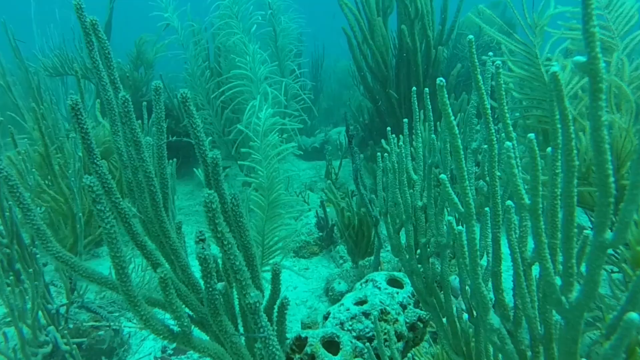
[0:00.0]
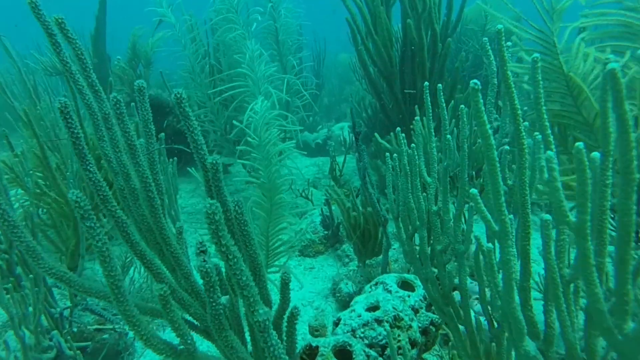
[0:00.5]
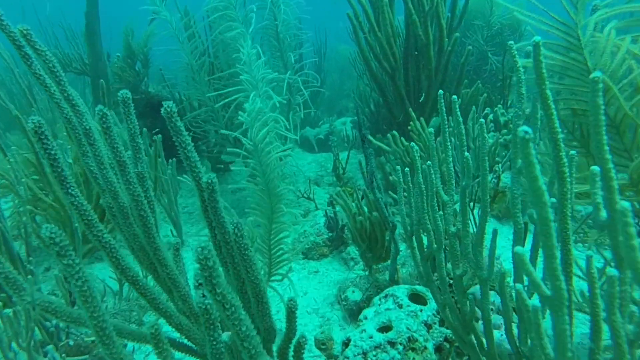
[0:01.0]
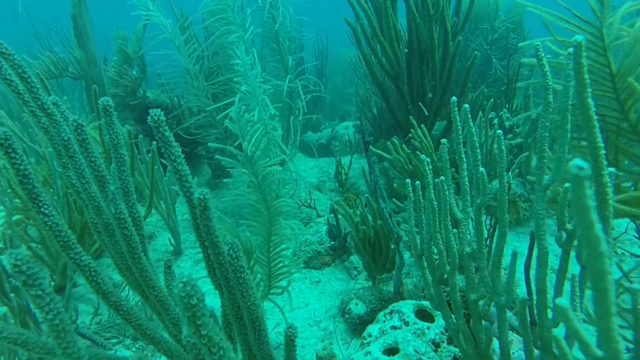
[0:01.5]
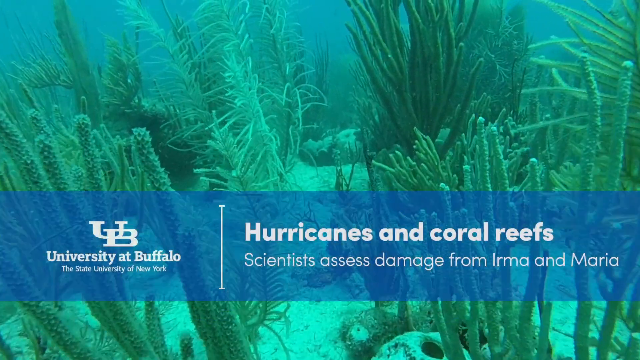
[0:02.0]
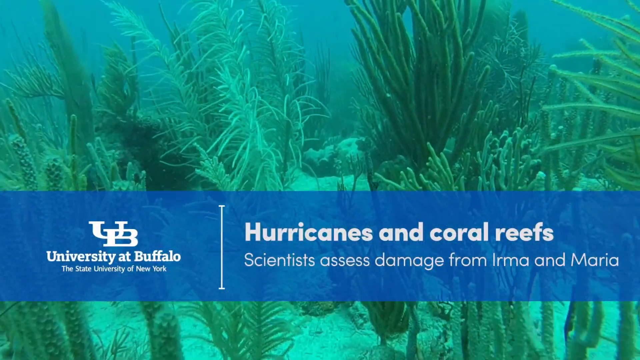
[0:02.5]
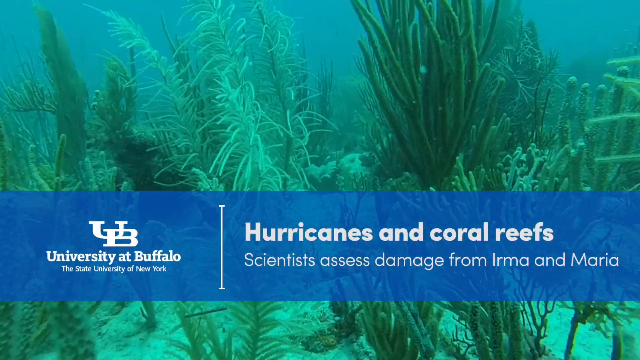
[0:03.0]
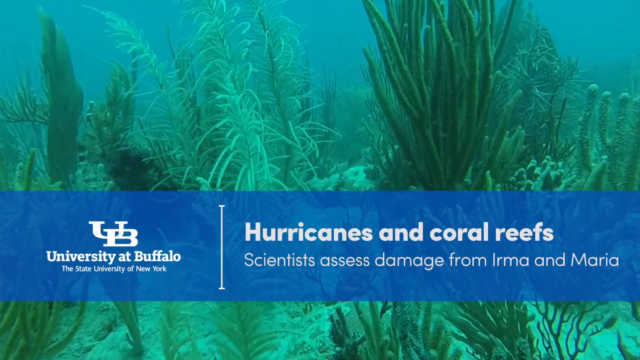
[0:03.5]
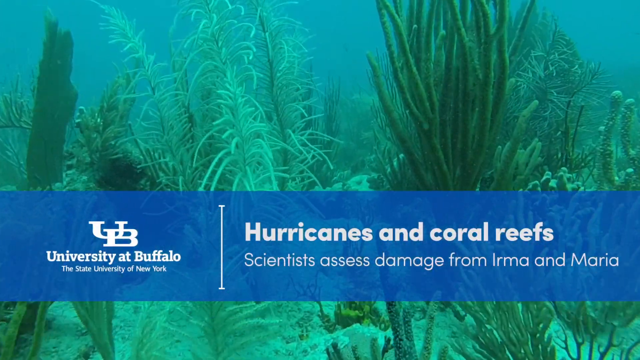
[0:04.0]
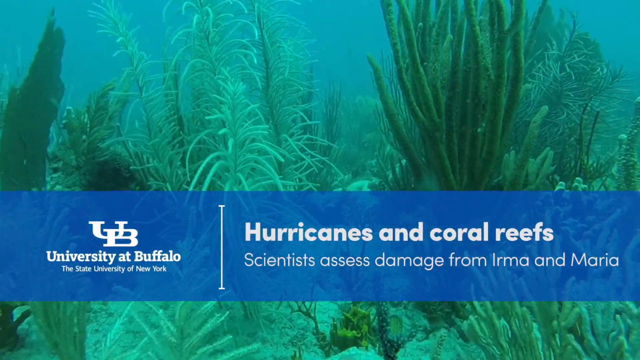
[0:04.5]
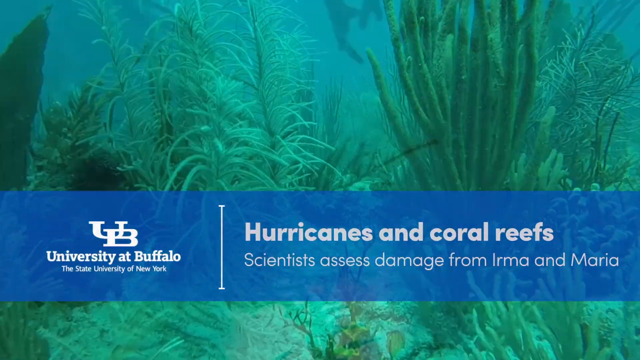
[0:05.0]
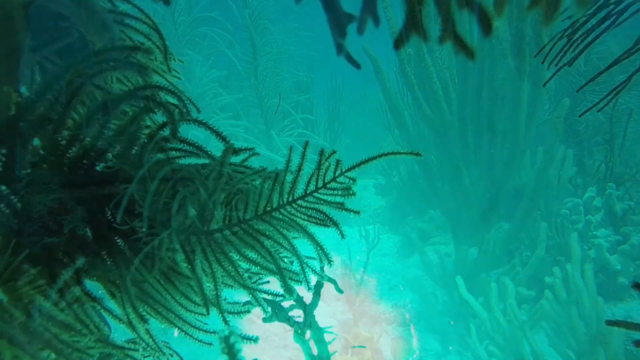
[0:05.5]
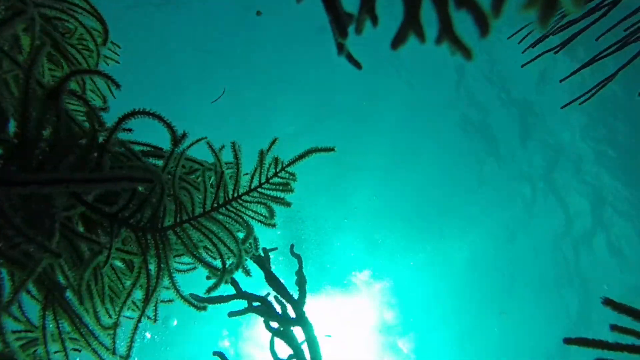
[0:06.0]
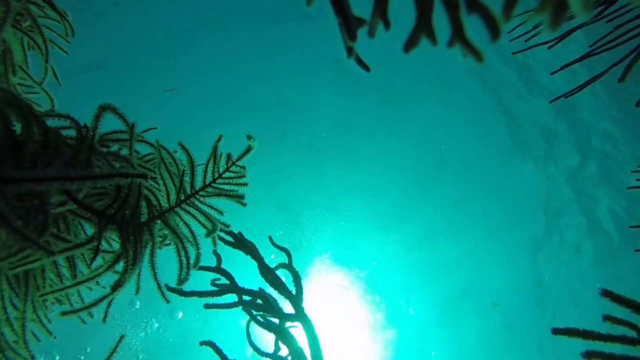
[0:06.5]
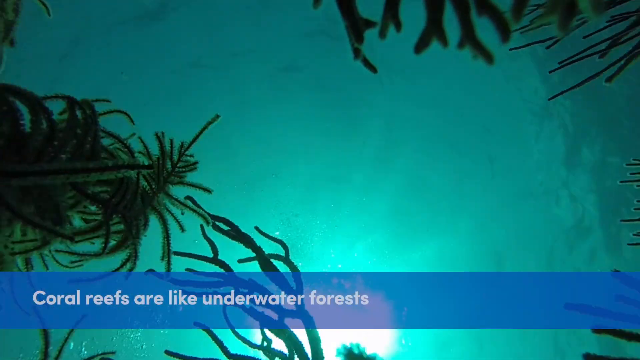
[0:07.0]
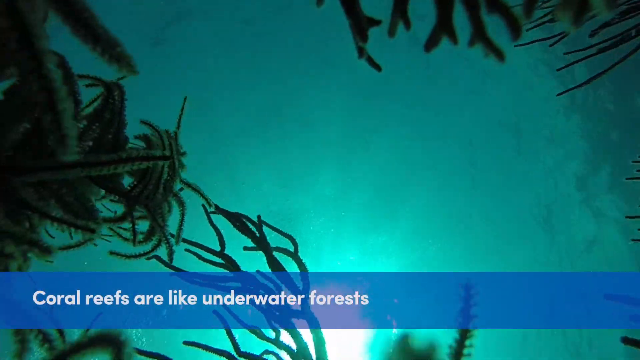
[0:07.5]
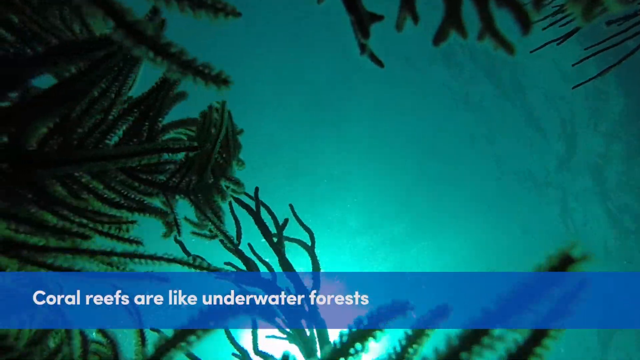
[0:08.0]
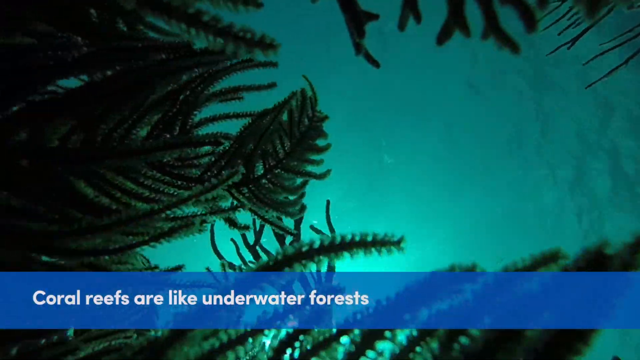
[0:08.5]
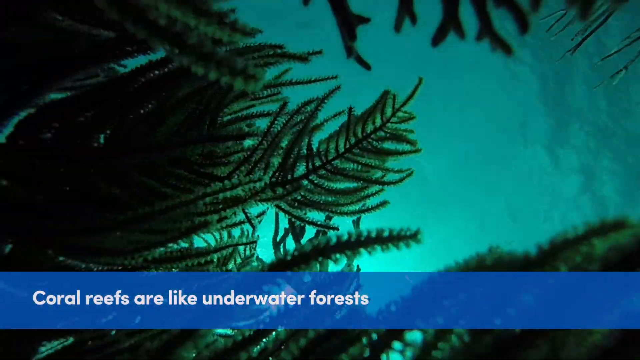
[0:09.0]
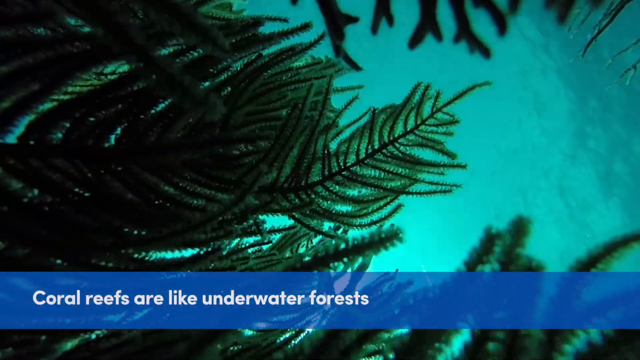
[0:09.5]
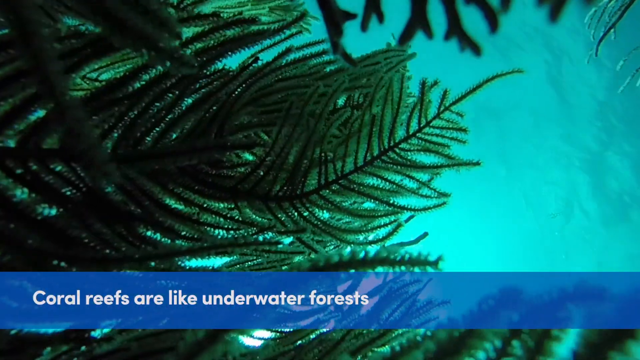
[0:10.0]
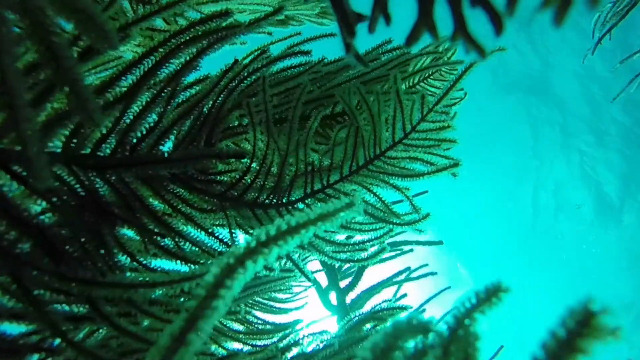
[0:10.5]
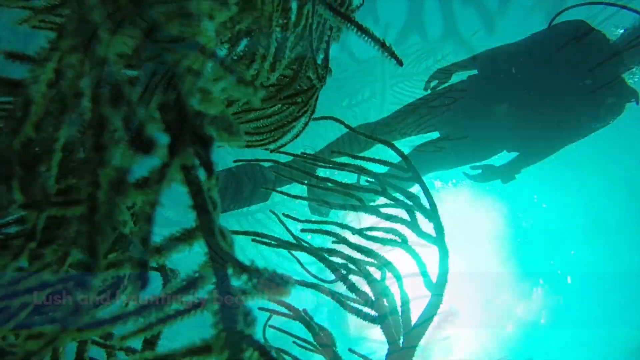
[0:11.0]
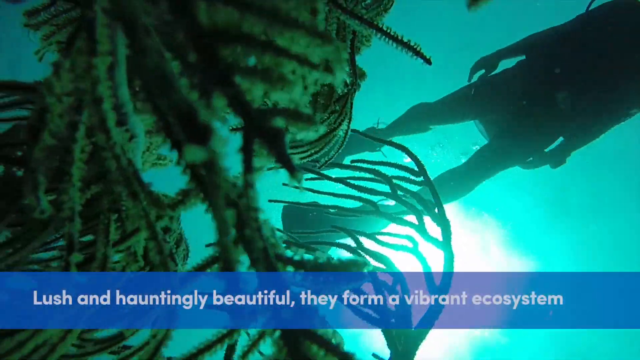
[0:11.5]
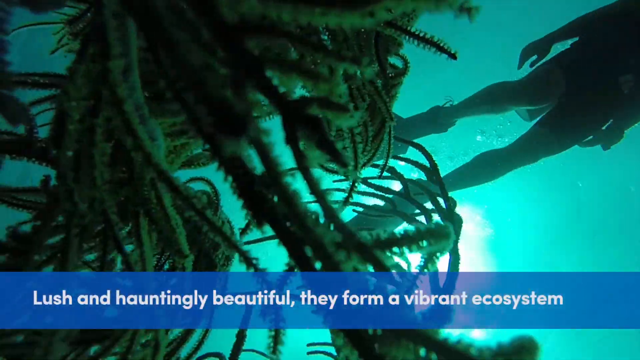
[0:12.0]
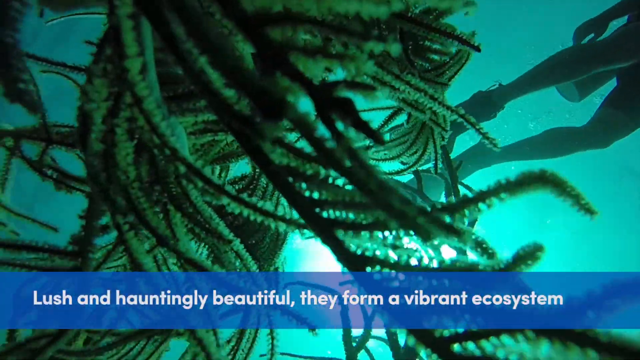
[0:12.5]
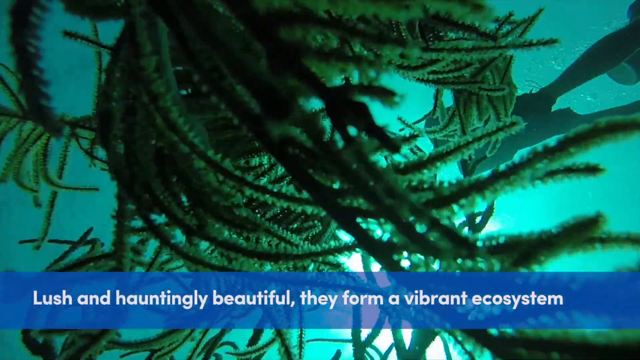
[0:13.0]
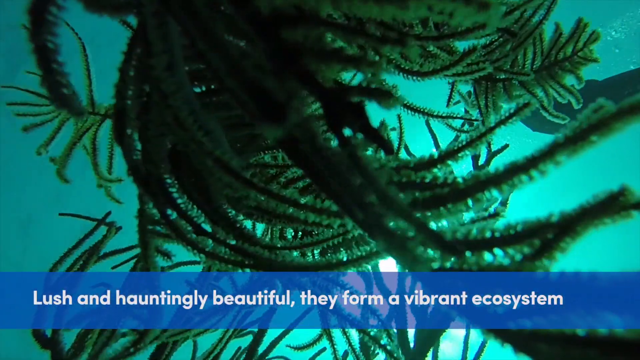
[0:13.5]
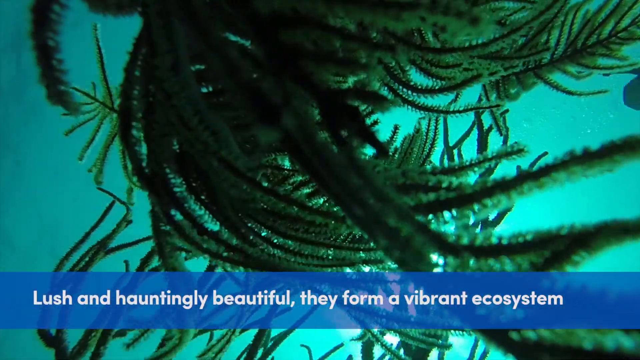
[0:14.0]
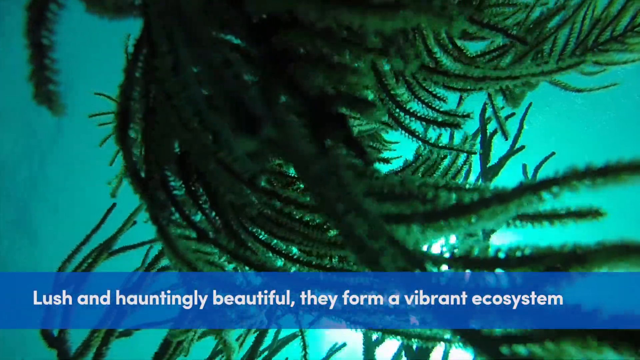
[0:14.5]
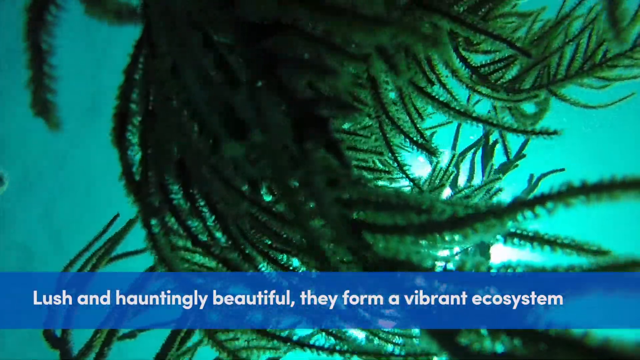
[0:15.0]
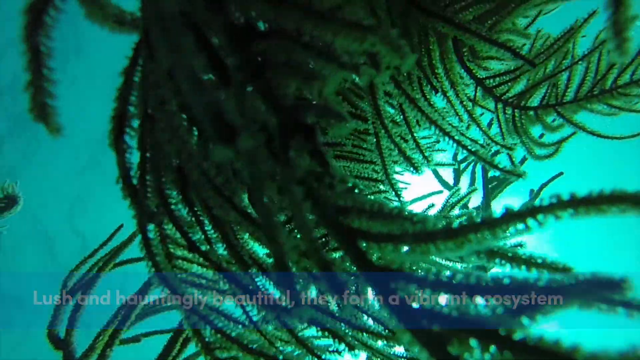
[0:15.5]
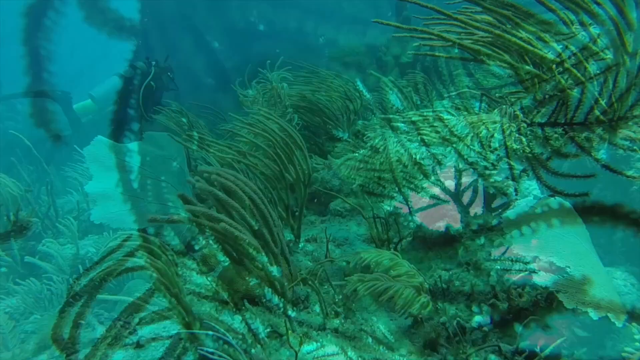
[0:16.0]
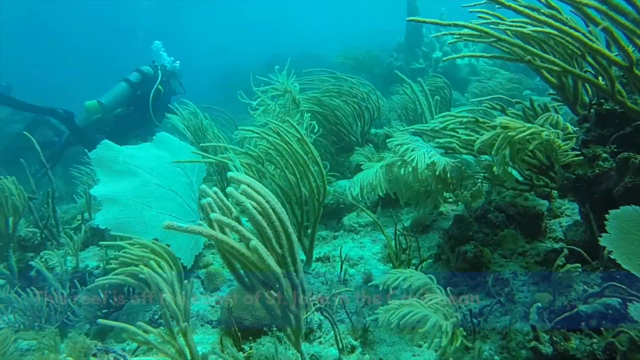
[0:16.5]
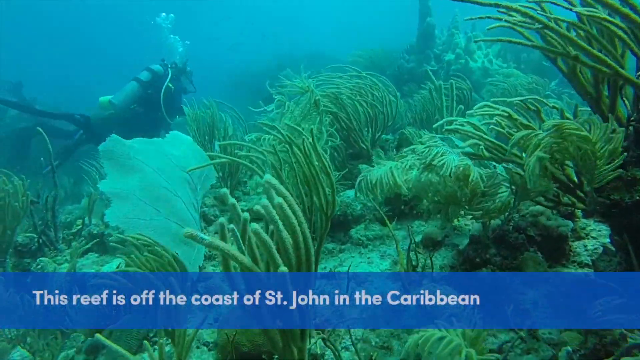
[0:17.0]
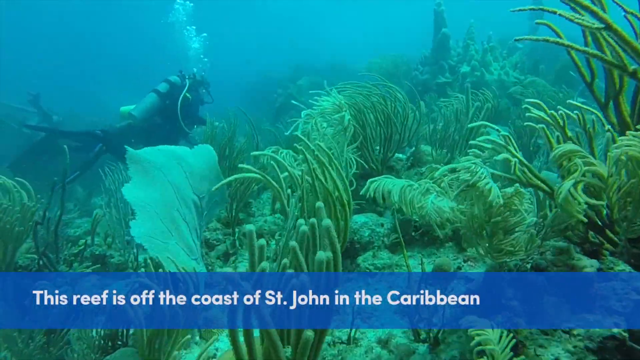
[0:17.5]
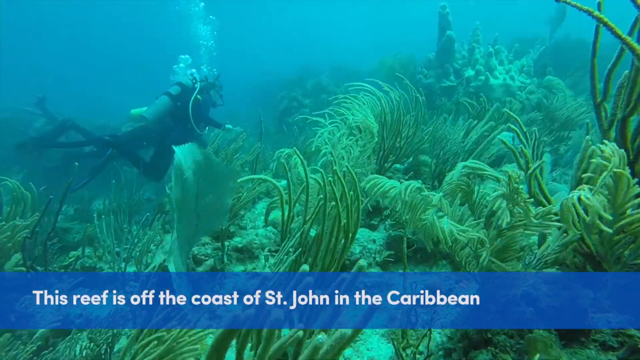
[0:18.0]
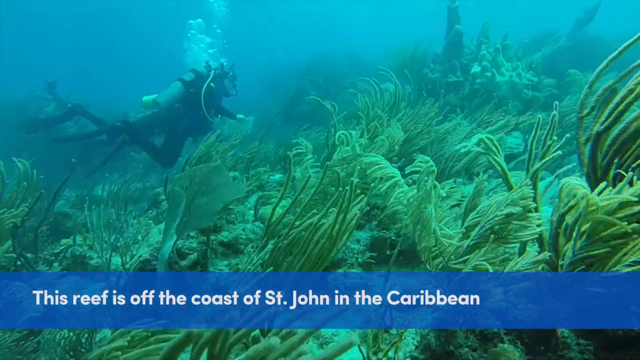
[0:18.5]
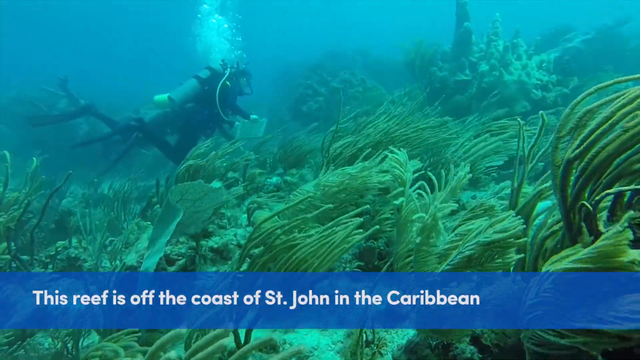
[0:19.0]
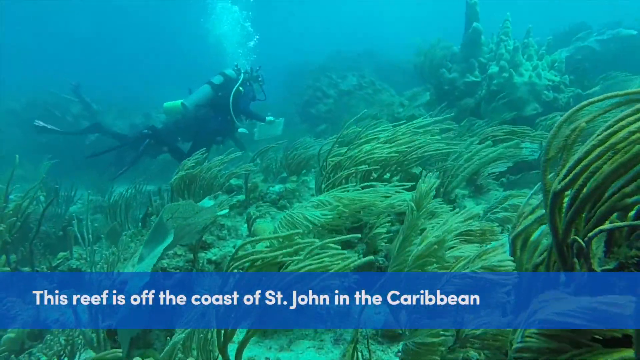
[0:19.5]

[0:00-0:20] The video opens on a picture of water, some kind of sea. On-screen text refers to hurricanes, reefs and scientists, mentioning "Irma and Maria". On the left, "University of Buffalo" and "State University of New York" appear on a blue rectangle. A glimpse of sun going into the water follows. Text beginning "coral reefs are" appears, and there are some green underwater flowers. Text mentioning "a vibrant ecosystem" appears in white on a rectangle. Text reads "this reef is off the coast of St. John's in Caribbean". A man swims in a black suit with a bottle full of oxygen.